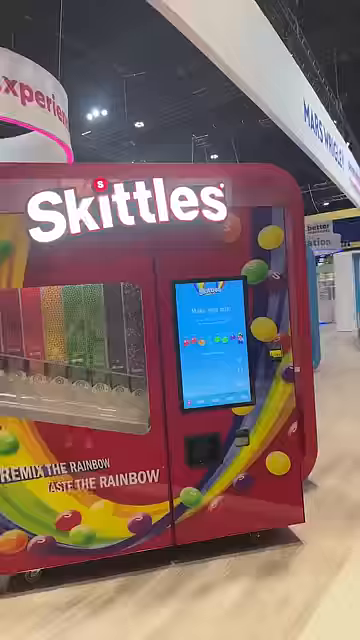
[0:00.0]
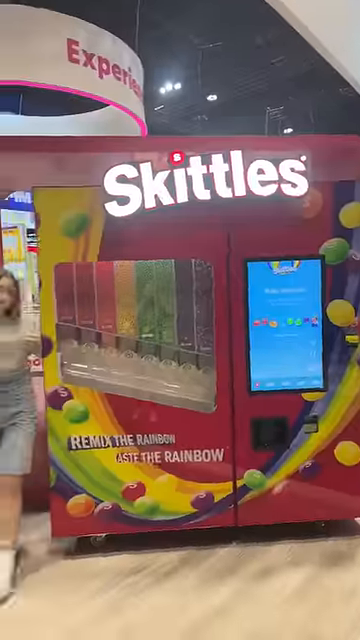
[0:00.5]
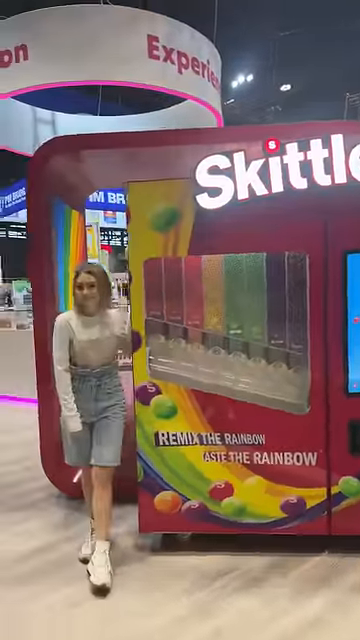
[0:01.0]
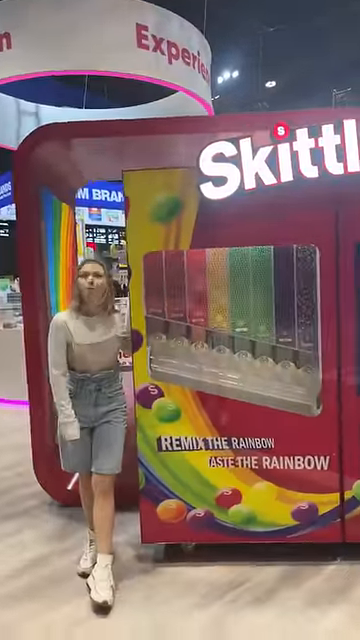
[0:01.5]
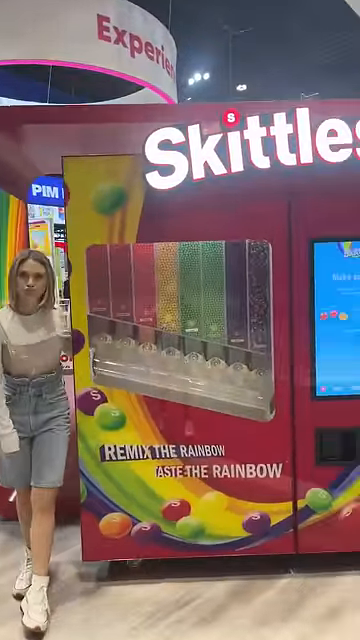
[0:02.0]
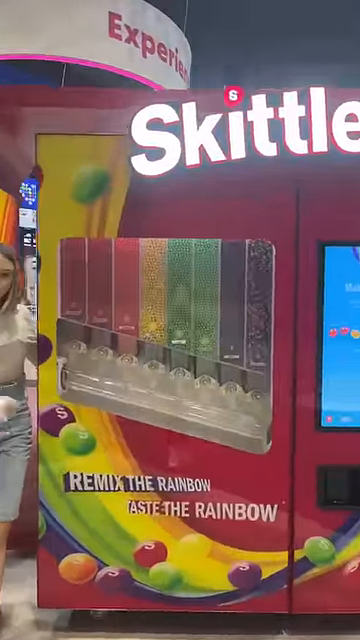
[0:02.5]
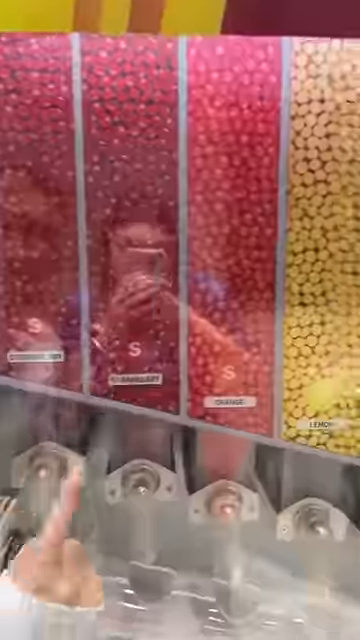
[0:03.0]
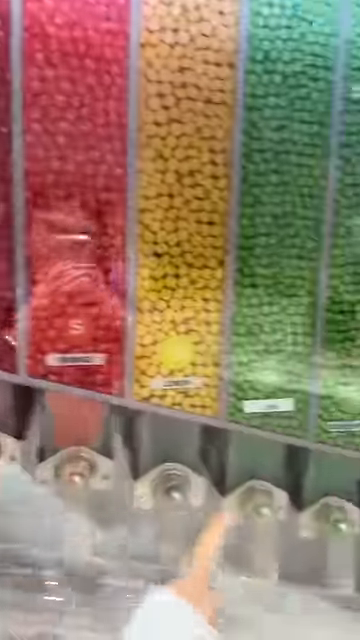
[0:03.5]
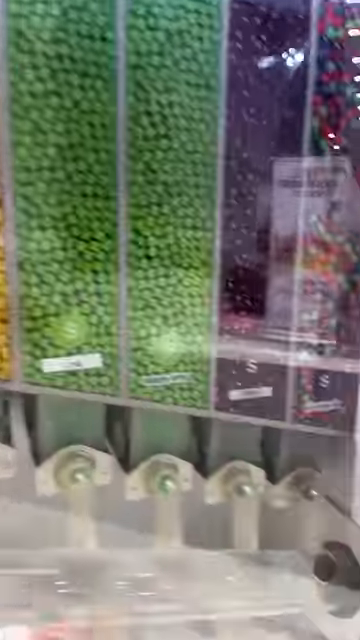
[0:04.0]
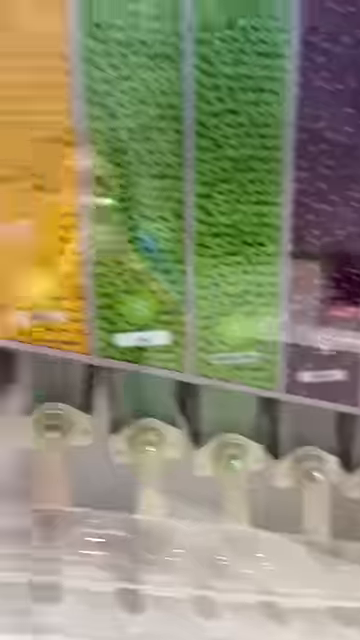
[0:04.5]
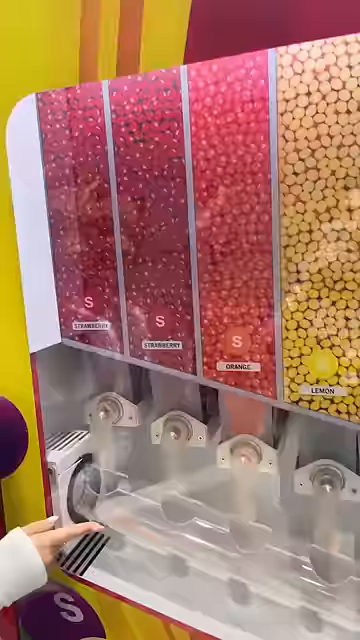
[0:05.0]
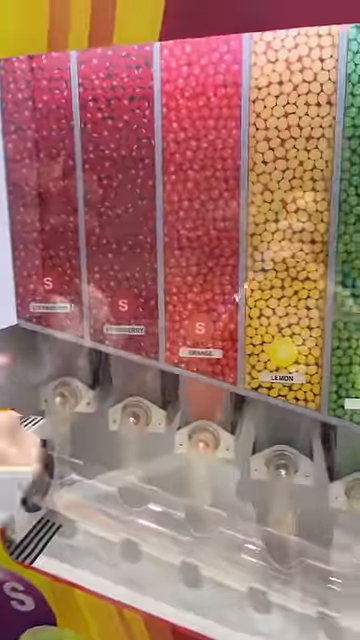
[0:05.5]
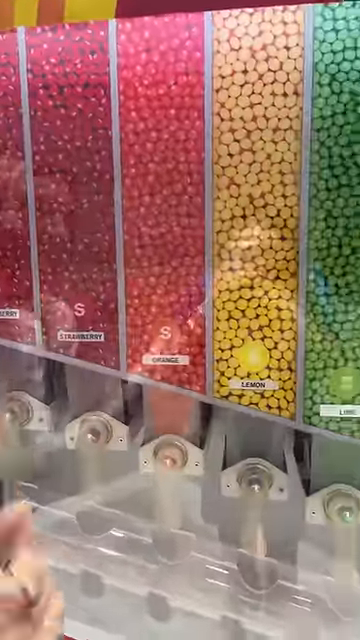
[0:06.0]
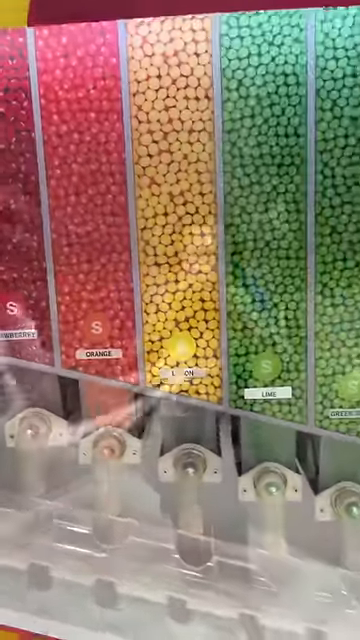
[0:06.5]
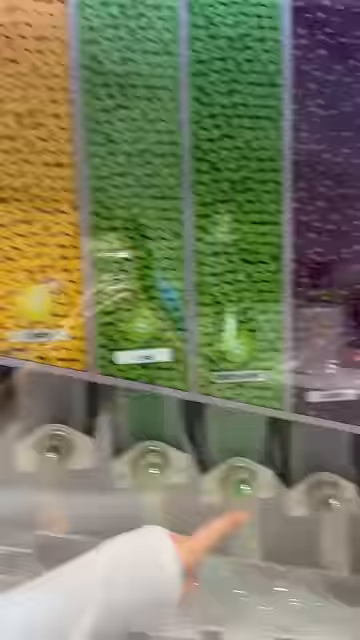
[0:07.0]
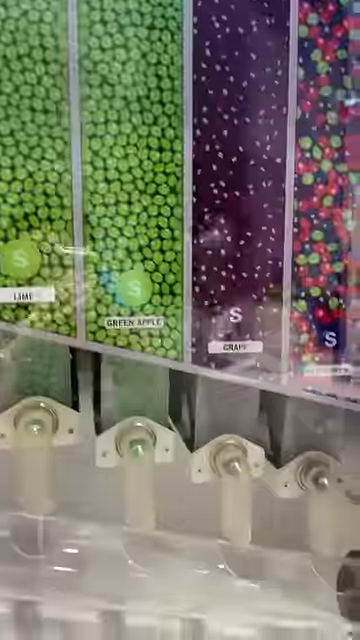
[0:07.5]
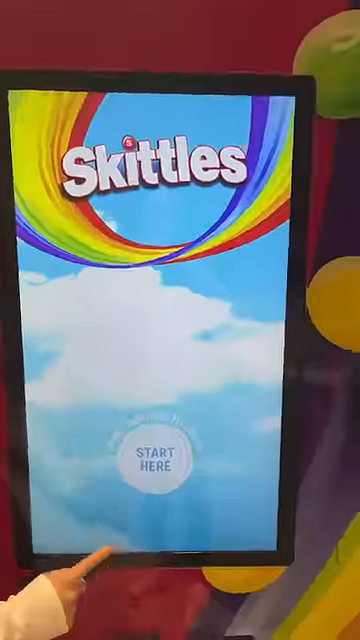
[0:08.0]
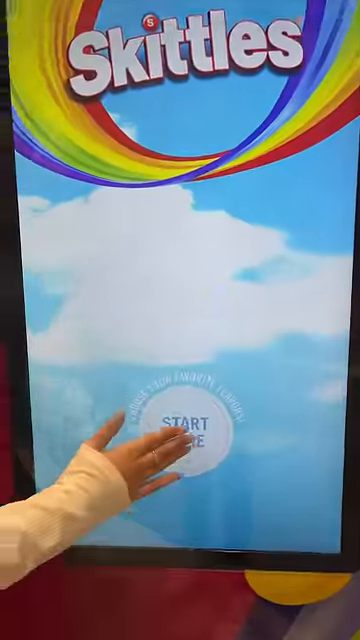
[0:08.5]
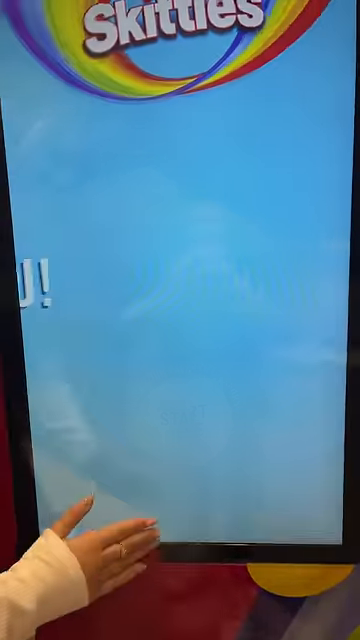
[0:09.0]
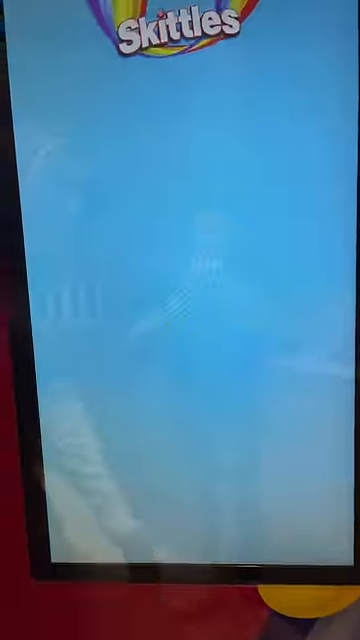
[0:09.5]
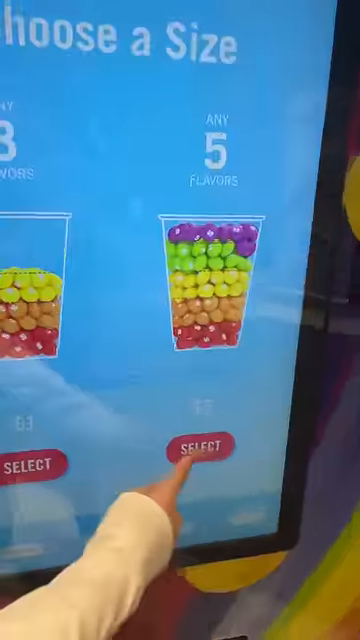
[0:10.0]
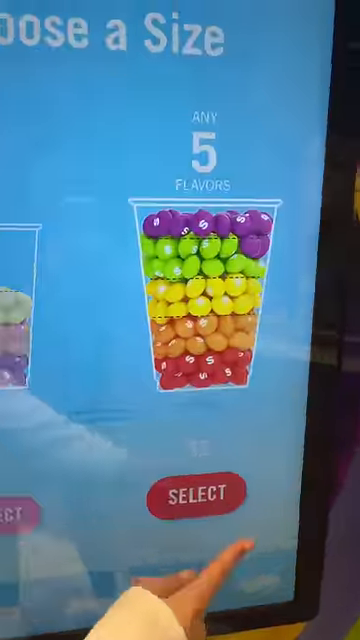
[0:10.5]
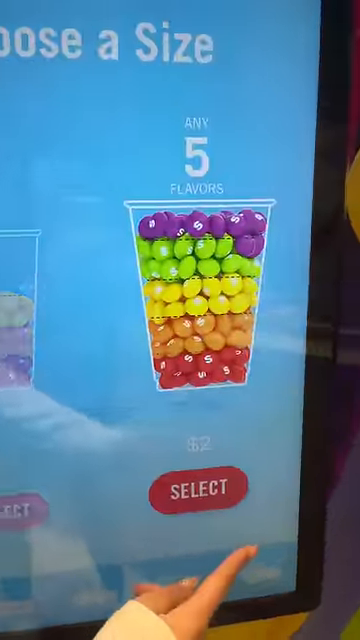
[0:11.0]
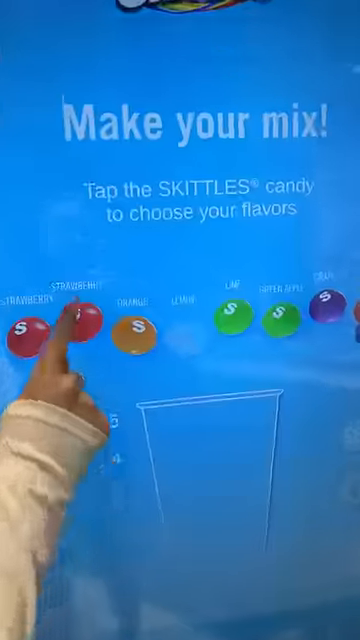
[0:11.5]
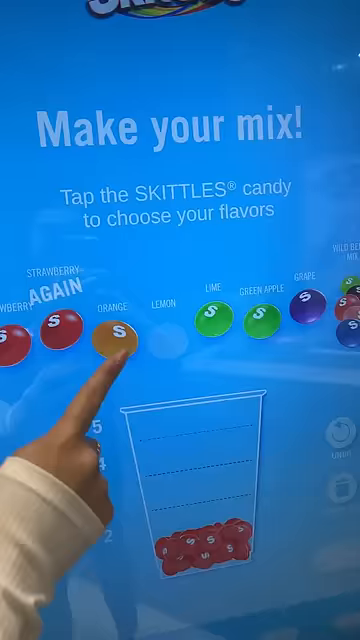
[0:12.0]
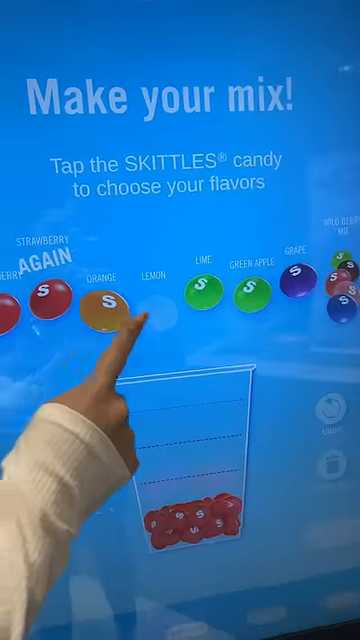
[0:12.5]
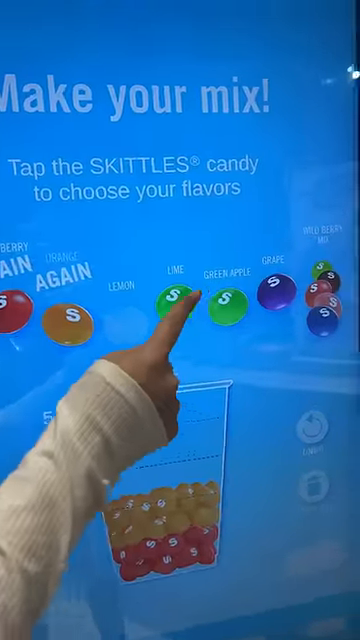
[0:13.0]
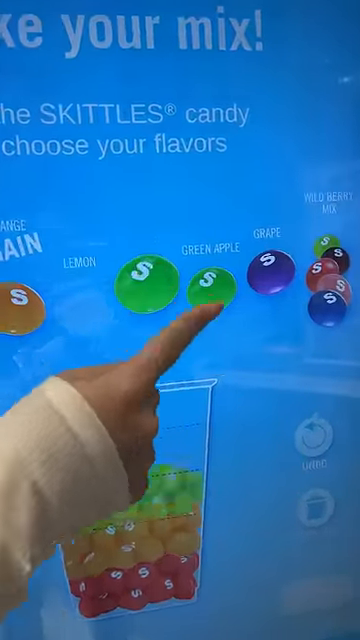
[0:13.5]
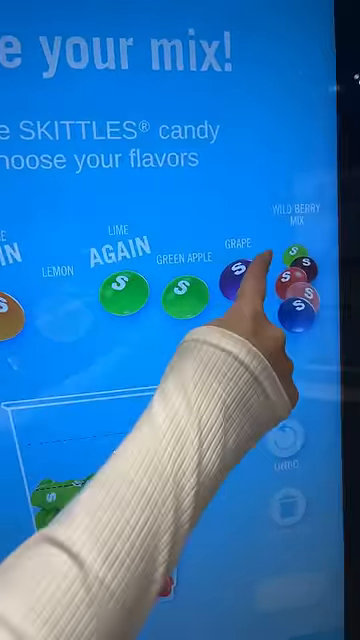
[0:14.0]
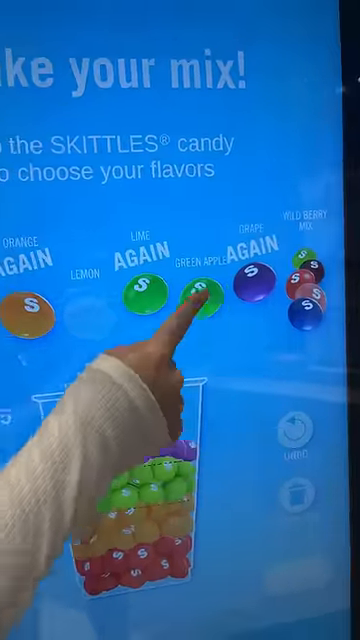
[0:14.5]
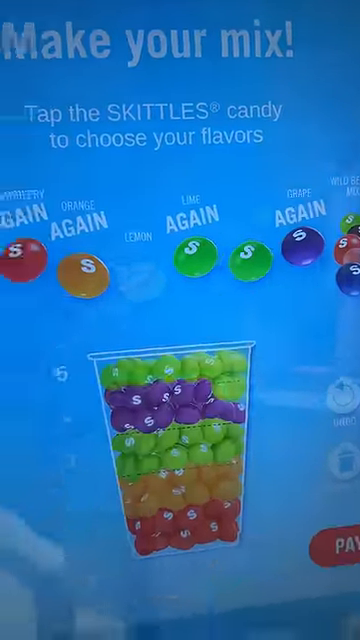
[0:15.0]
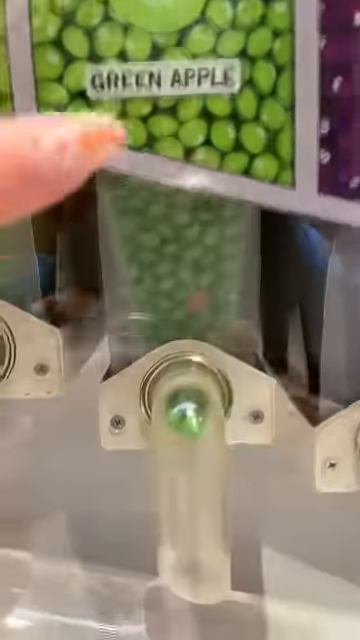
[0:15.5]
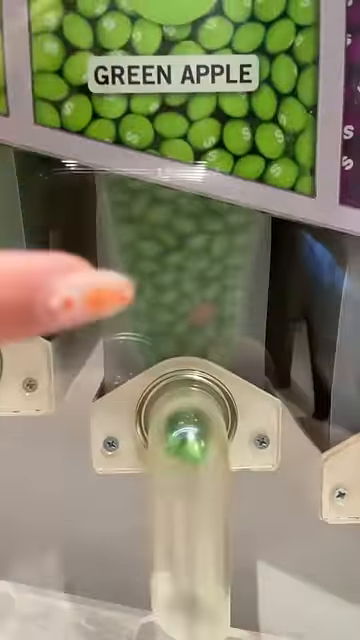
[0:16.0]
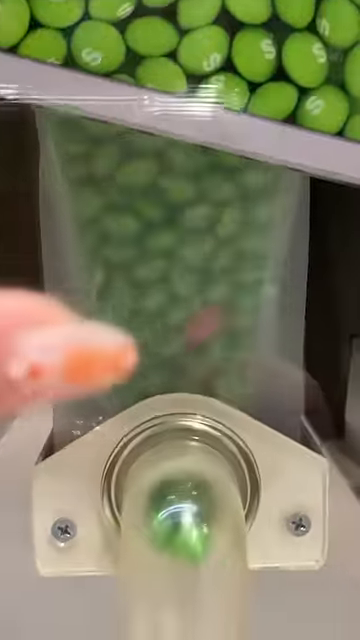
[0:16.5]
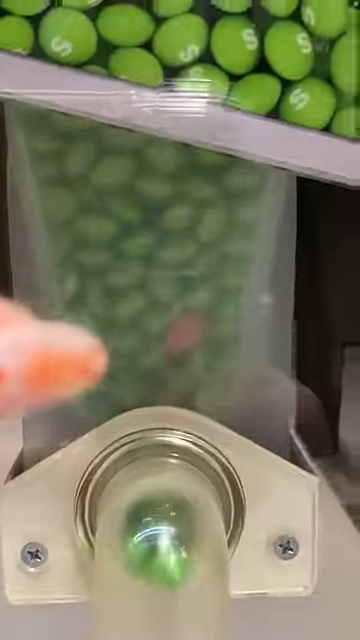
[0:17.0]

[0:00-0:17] The very colorful video shows a whole bunch of Skittles candy arranged in rainbow order, for the Skittles candy company, while a person points to different colors. The colors run like a rainbow: two red, one orange, one yellow, two green, and then purple. There is what seems to be a digital screen that responds to touch, and a cup can be placed at the areas where the Skittles come out. The person's hand pushes on some of the Skittles colors, and text says "make your mix." She also points to the green apple as she is talking. In the background, a reflection on the plastic screen in front of all the Skittles shows that someone is filming her. The woman wears jean shorts, a long-sleeved white belly shirt that leaves her belly button exposed, and white tennis shoes. She has long nails that are painted and done up with speckles.